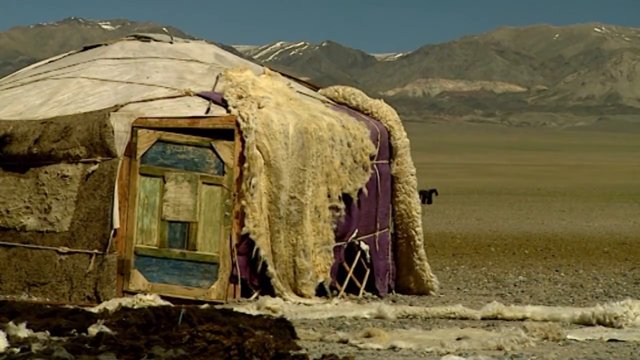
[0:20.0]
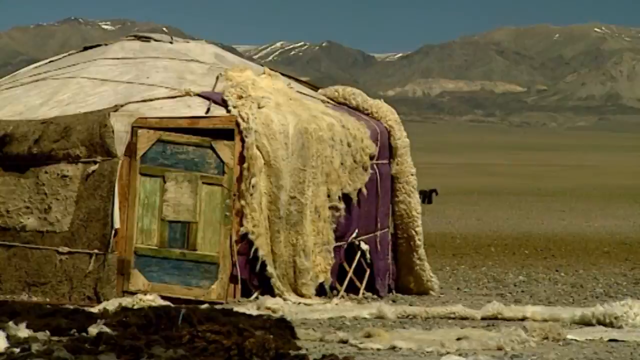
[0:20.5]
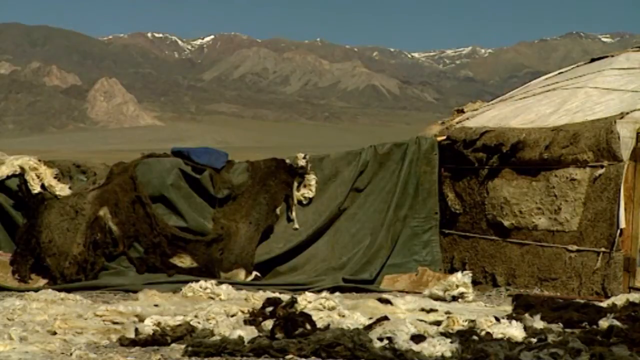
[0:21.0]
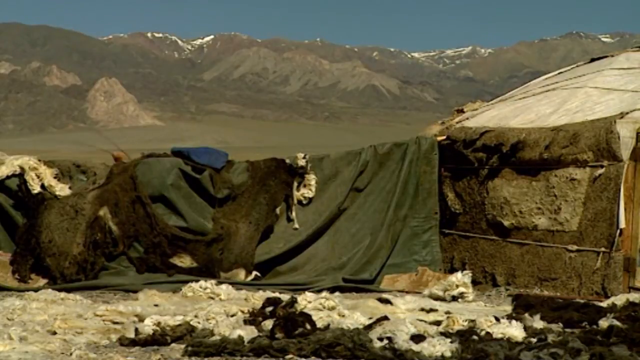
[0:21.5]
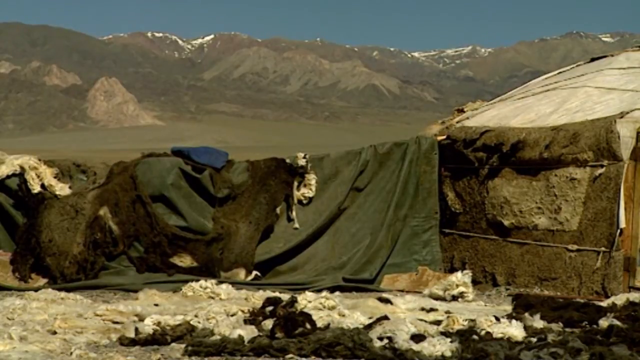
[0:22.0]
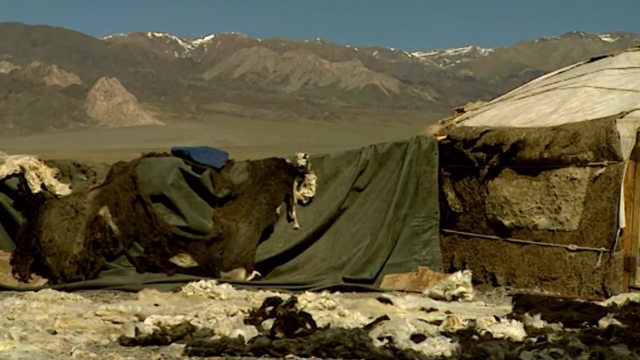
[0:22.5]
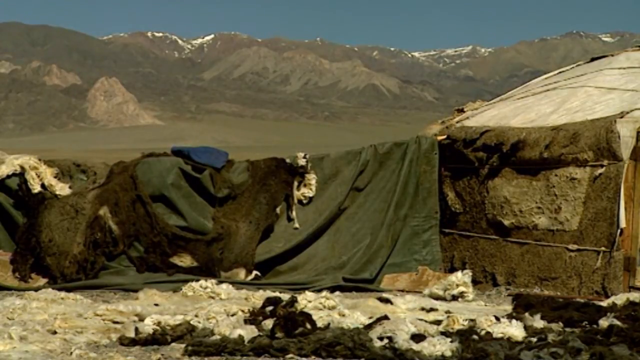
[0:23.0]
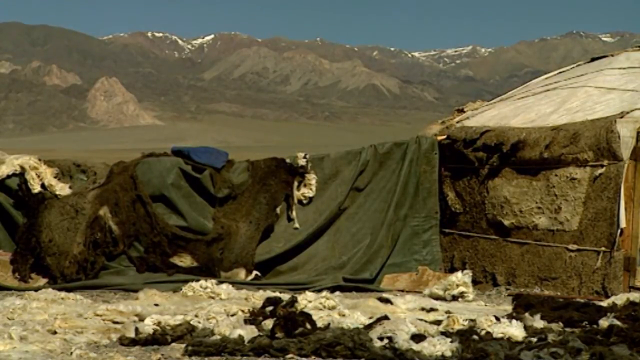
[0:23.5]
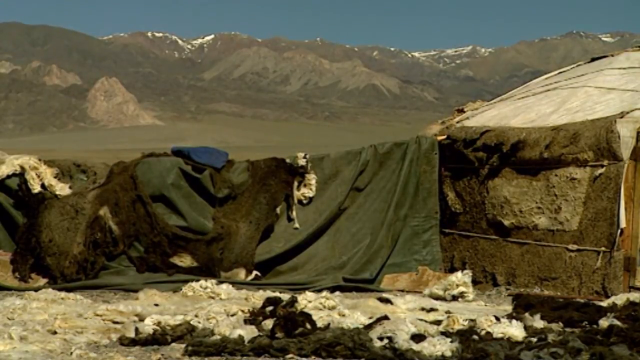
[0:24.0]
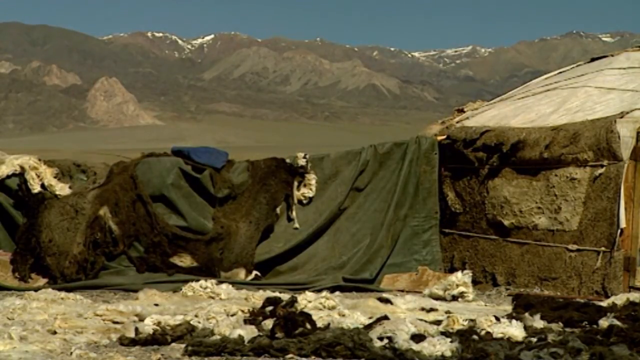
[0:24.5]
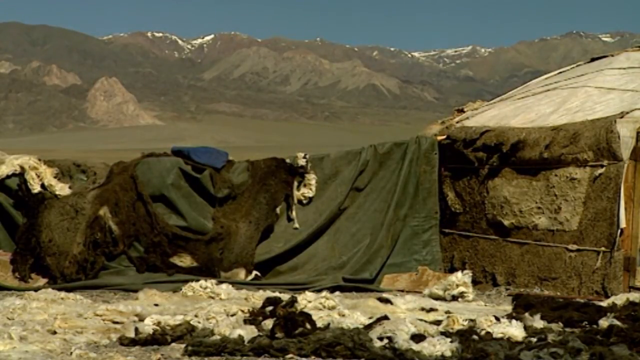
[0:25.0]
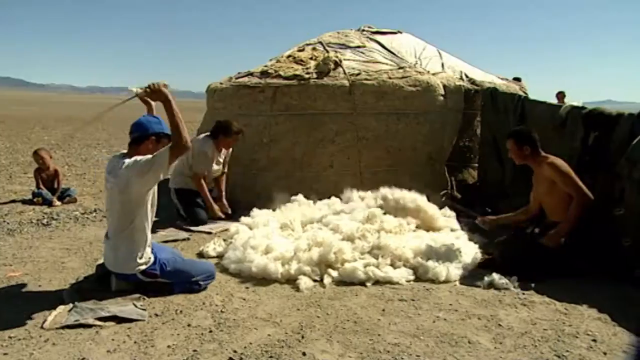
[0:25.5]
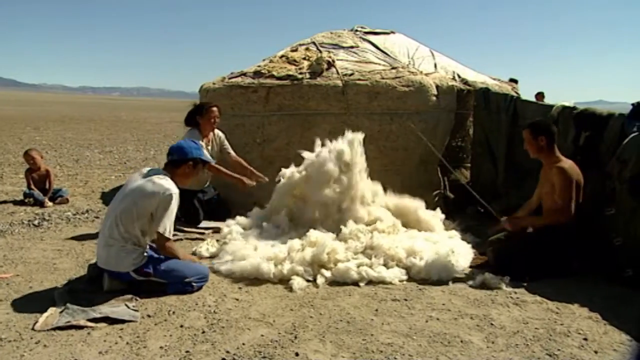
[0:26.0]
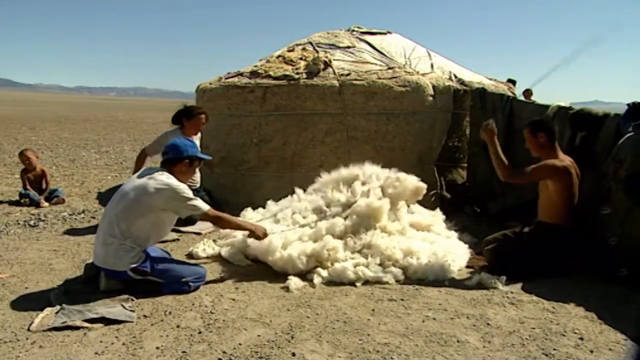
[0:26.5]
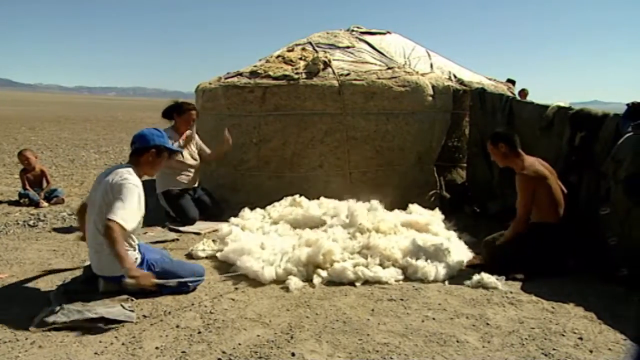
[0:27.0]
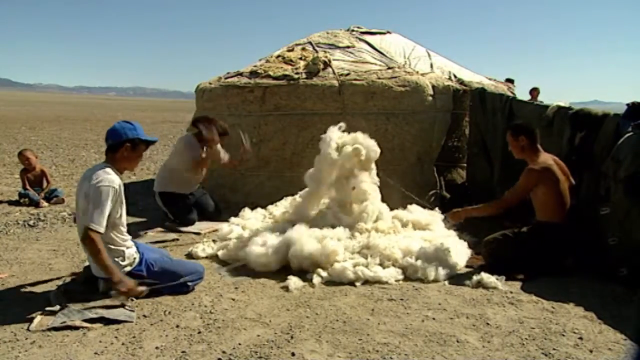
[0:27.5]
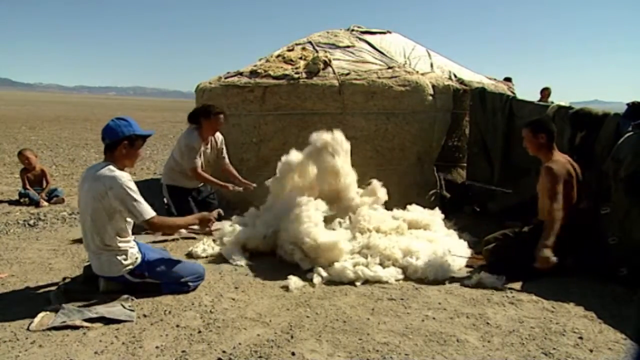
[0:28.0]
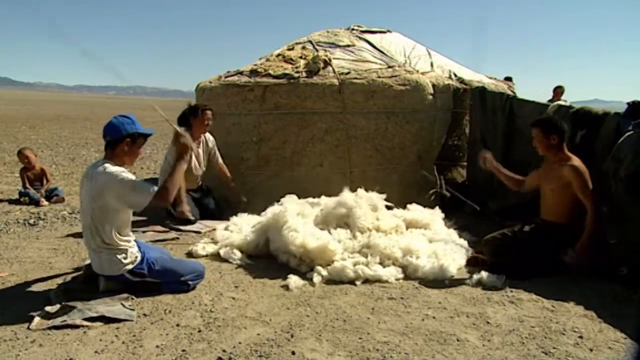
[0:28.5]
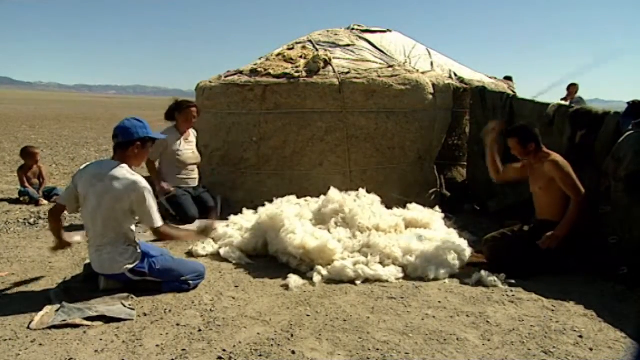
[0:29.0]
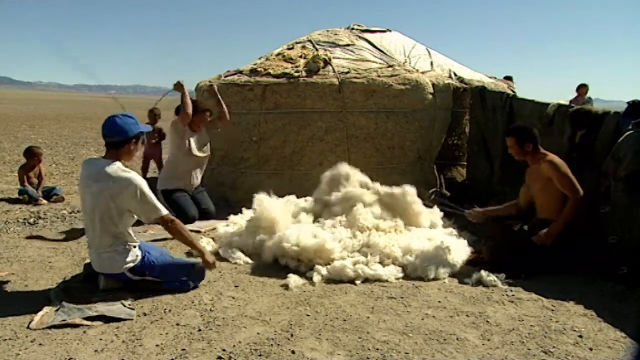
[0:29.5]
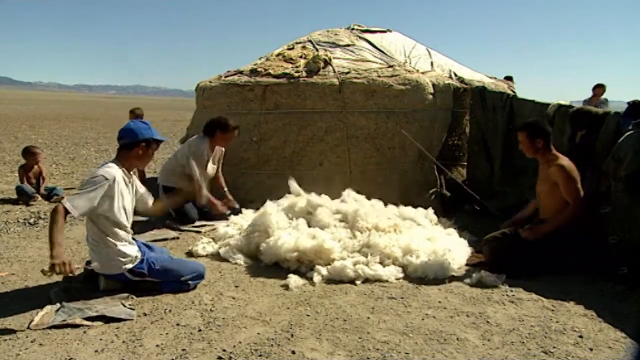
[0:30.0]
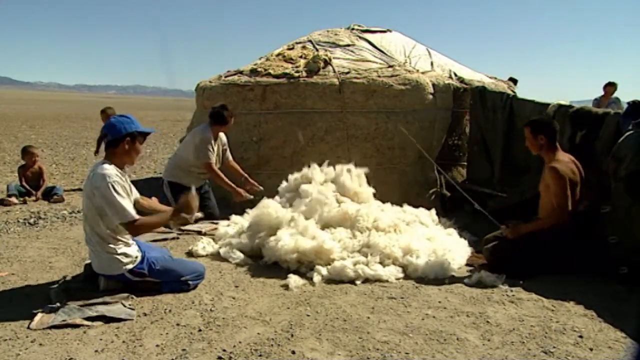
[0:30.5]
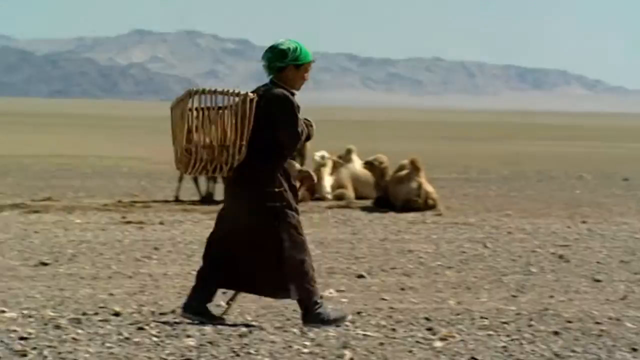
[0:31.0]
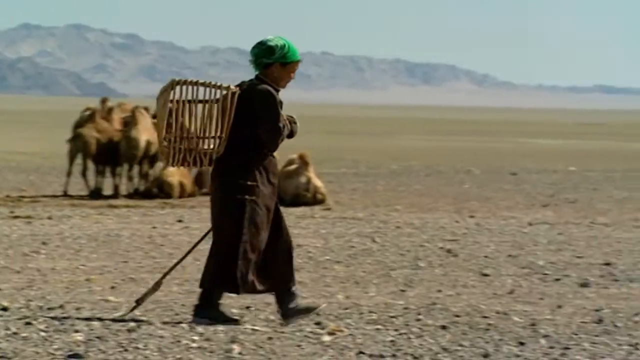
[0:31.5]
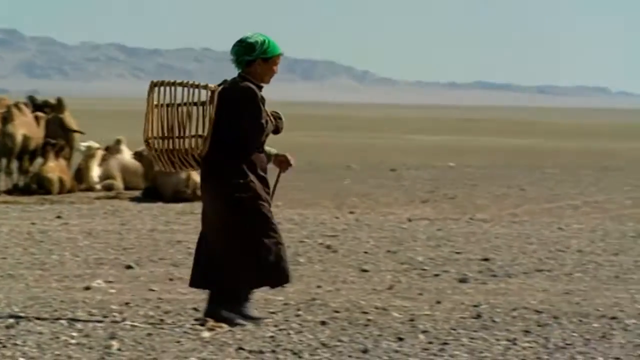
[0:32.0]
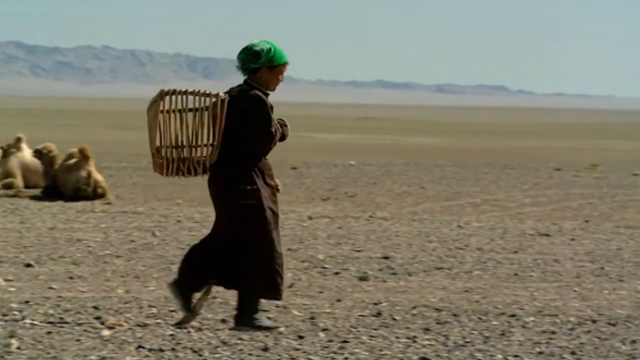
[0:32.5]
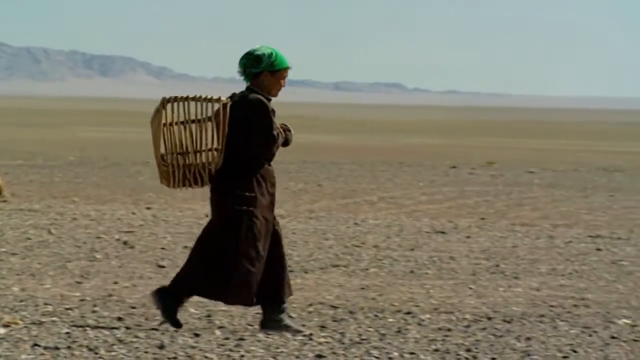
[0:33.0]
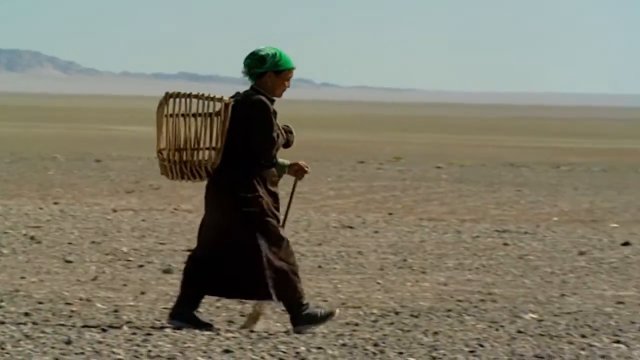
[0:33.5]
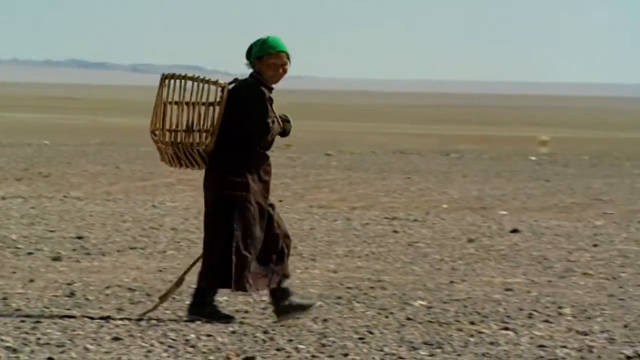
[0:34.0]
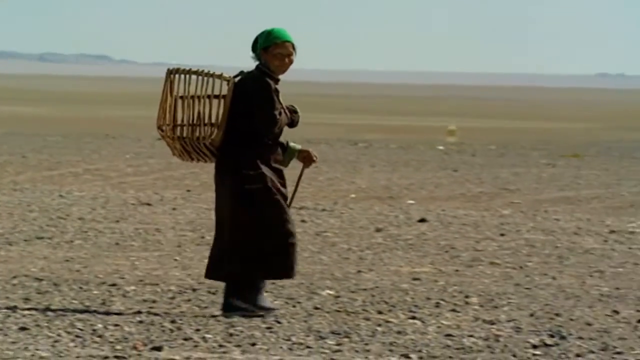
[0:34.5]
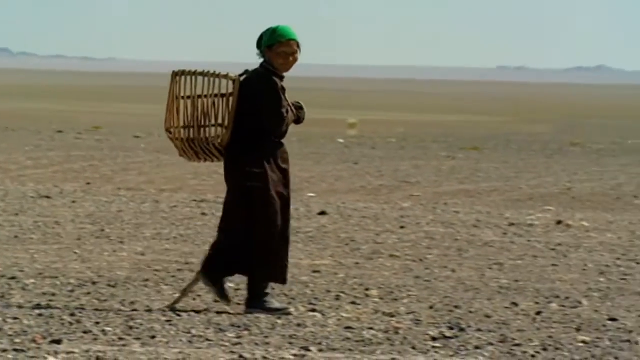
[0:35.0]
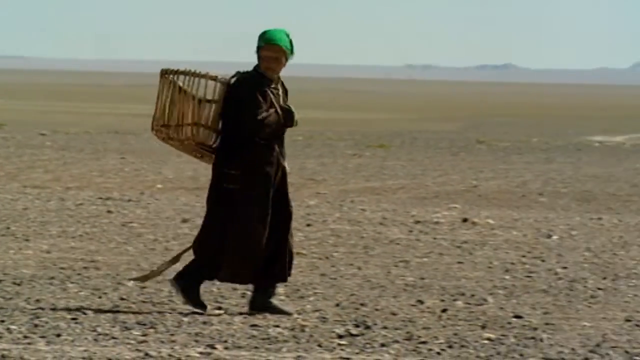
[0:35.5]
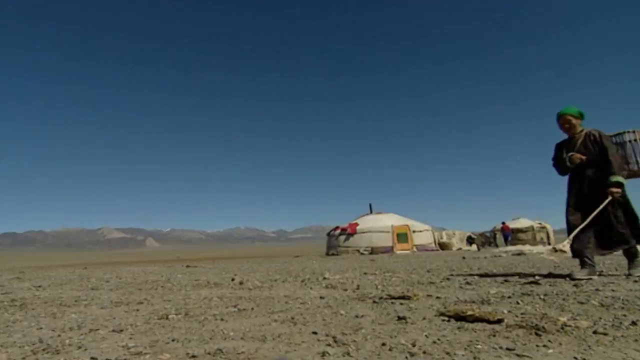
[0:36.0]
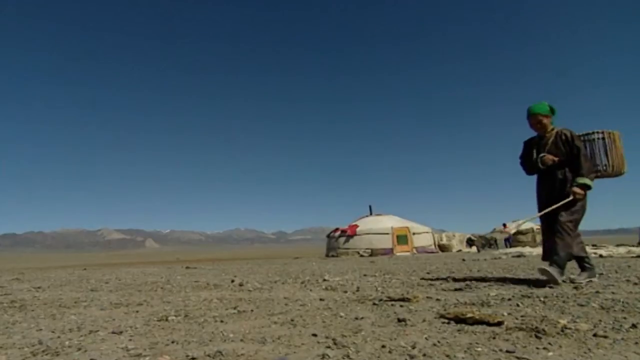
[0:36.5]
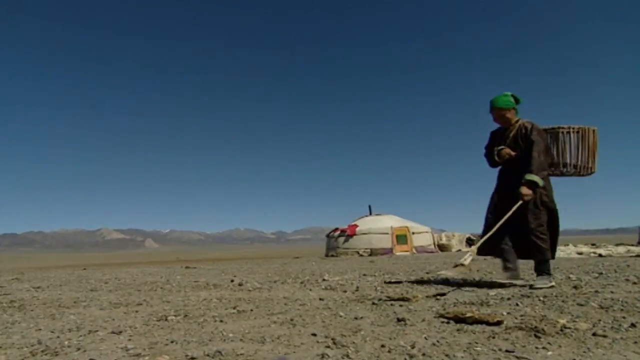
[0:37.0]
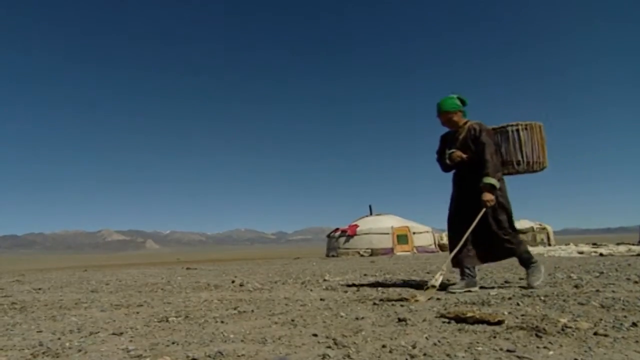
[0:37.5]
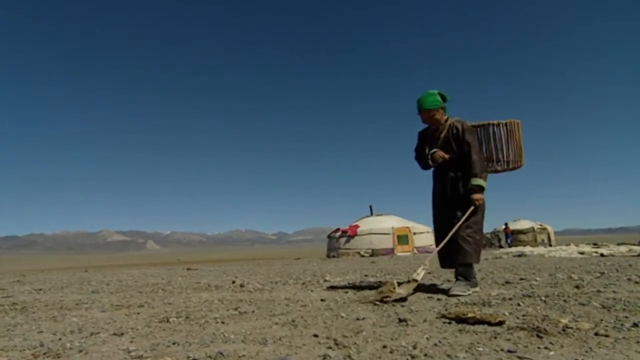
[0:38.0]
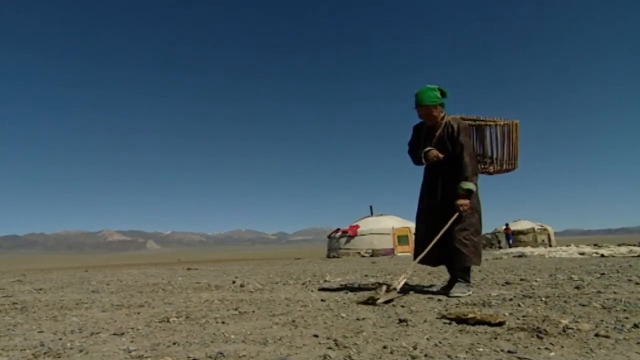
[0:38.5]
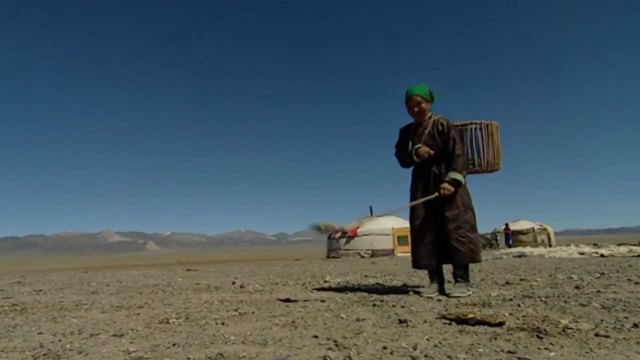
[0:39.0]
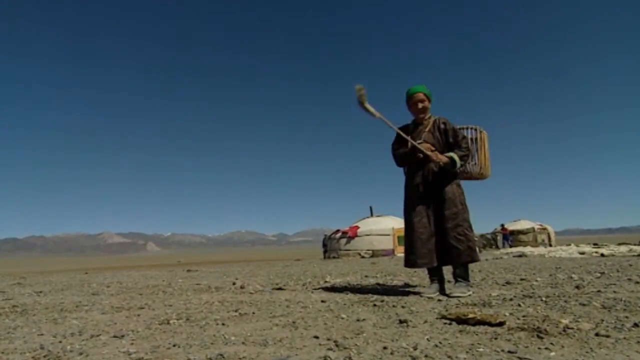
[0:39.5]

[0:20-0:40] A brown tent is seen at closer range, with a door fitted with some wood. Things that look like animal skin hang on the side of the tent, and the camera focuses on a line along the side of the tent with some cloth and things like animal skin hanging from it. The scene changes to some people, a woman, two children and two men, hitting white things on the ground. Next, the woman walks toward the camera holding a stick, with a bucket at her back and a green scarf on her head. She then collects something from the ground using the stick, which has a flat object on top for collecting, while two tents are visible in the background.